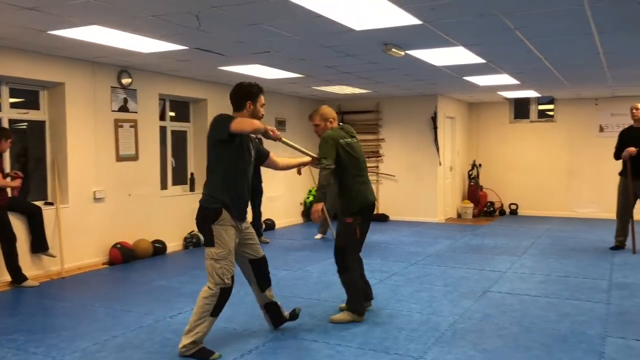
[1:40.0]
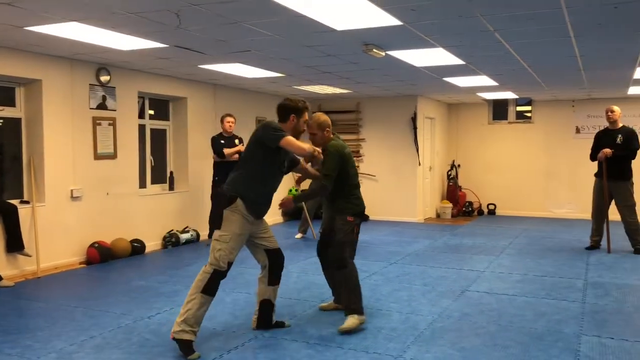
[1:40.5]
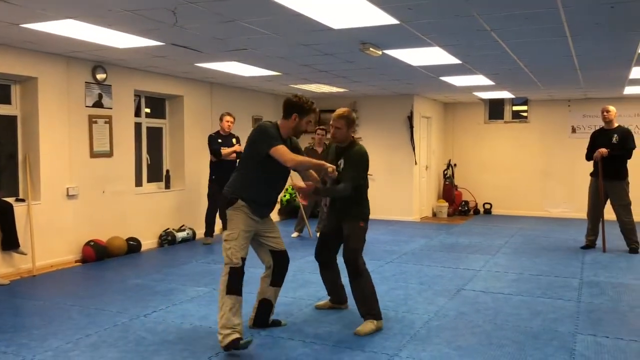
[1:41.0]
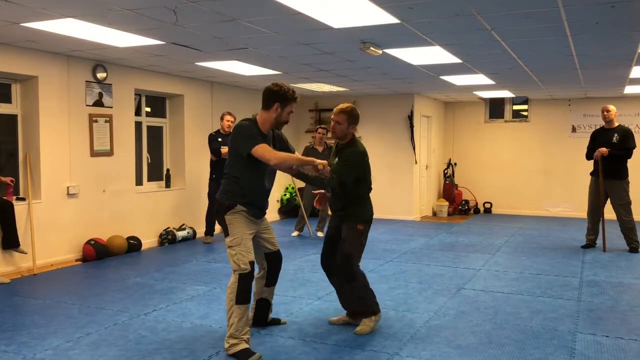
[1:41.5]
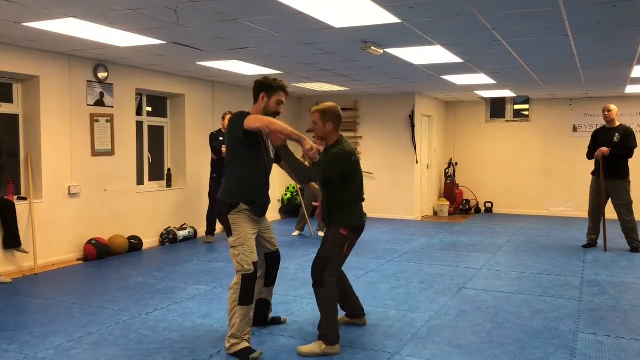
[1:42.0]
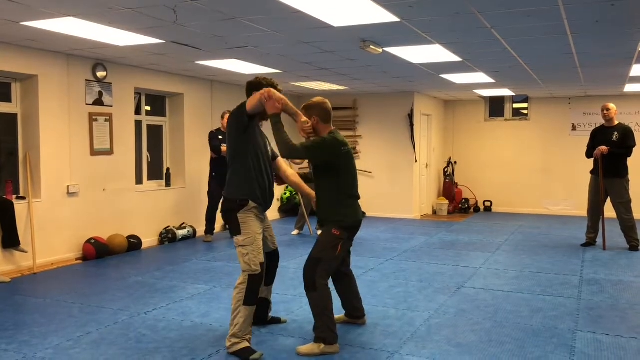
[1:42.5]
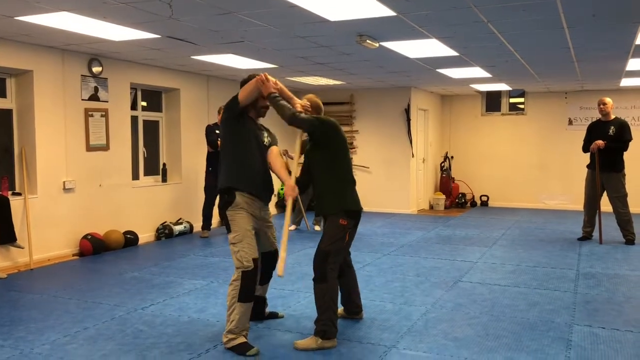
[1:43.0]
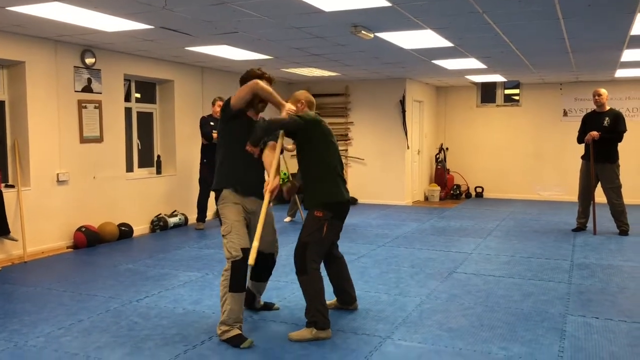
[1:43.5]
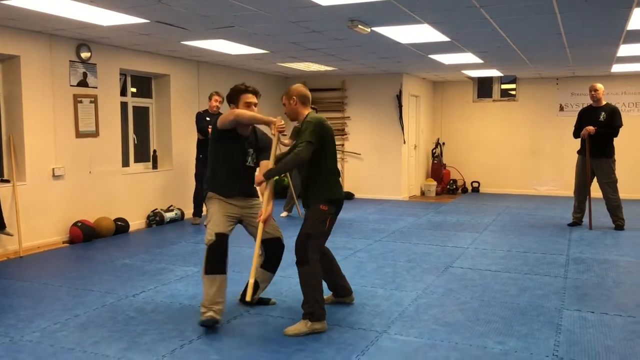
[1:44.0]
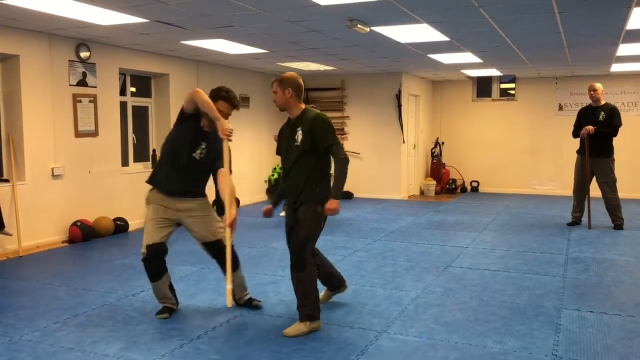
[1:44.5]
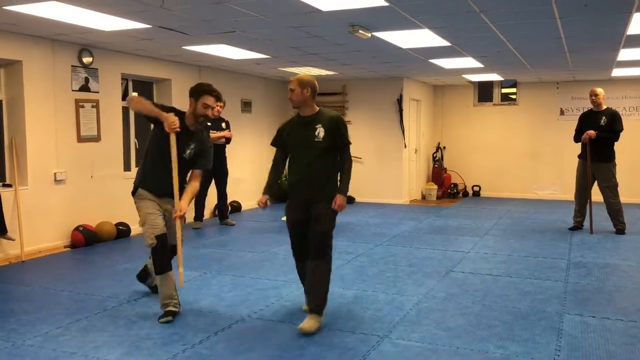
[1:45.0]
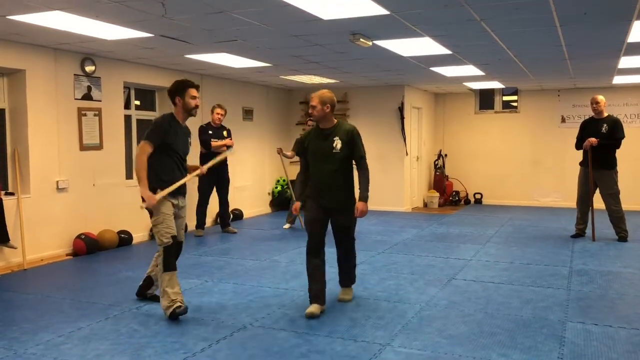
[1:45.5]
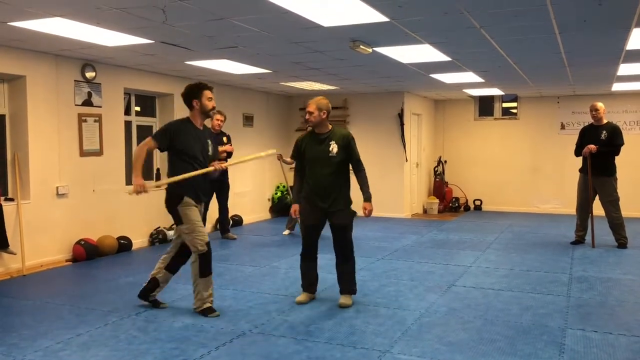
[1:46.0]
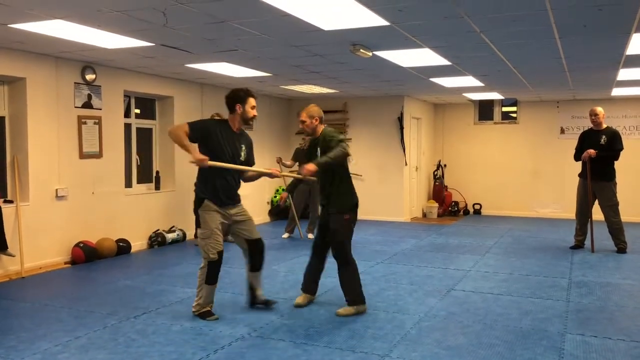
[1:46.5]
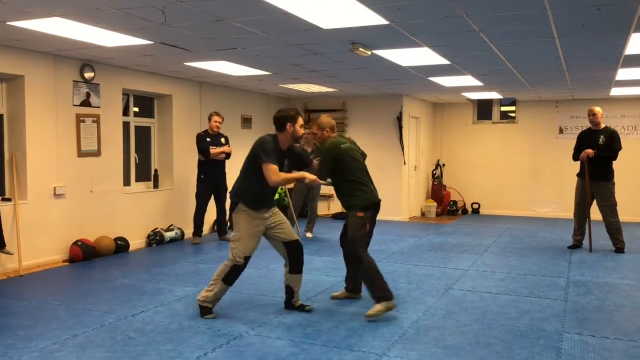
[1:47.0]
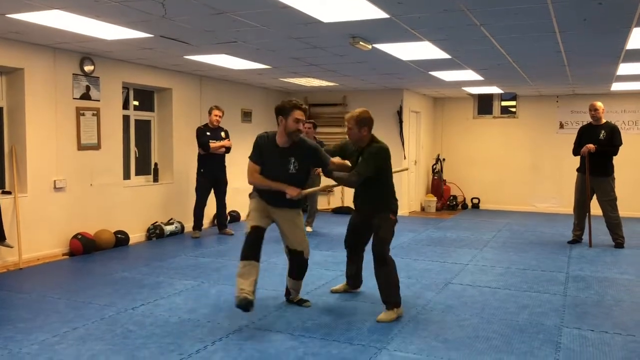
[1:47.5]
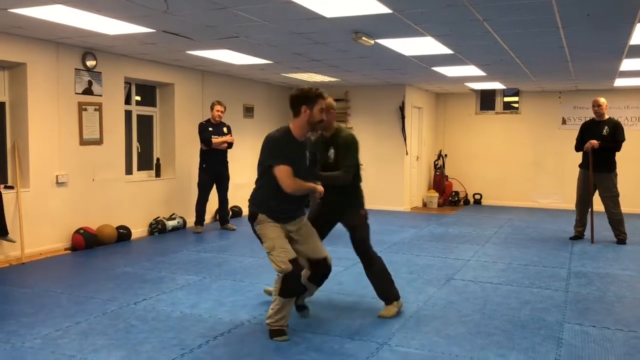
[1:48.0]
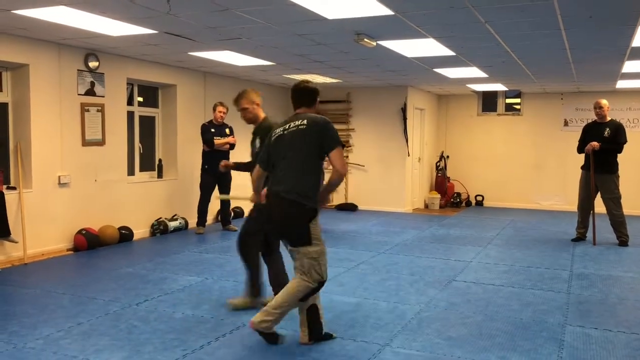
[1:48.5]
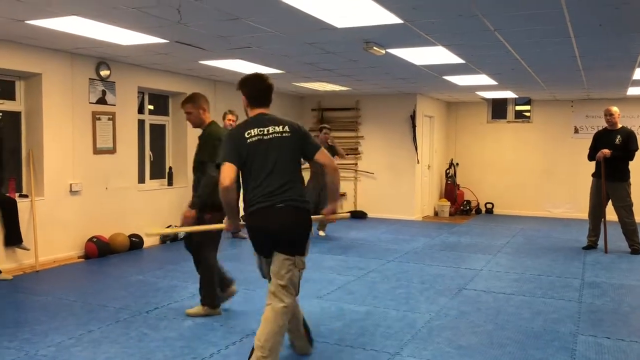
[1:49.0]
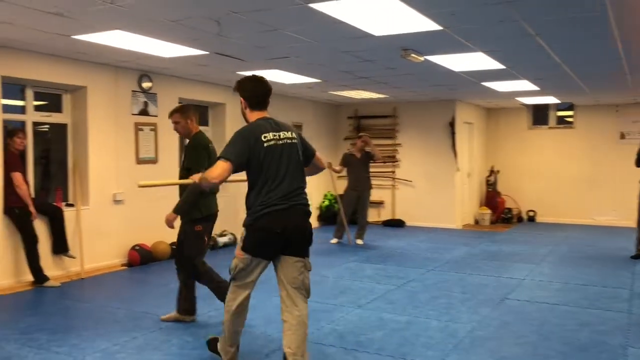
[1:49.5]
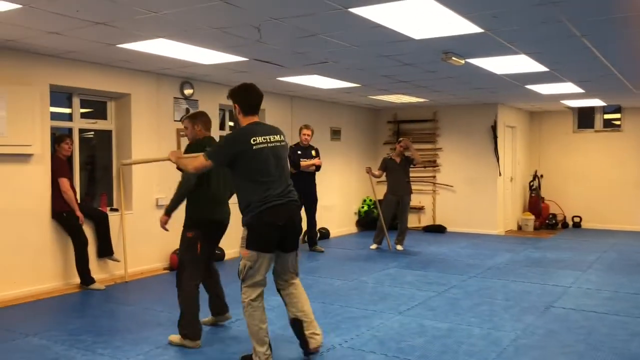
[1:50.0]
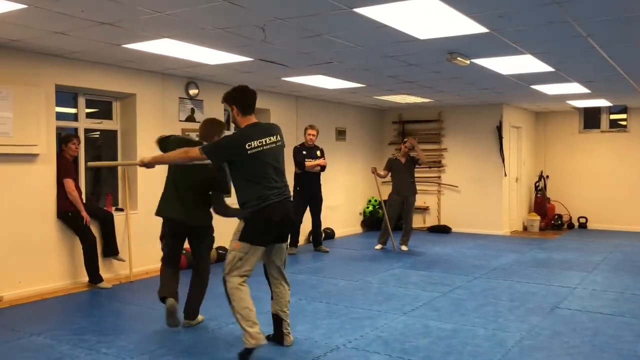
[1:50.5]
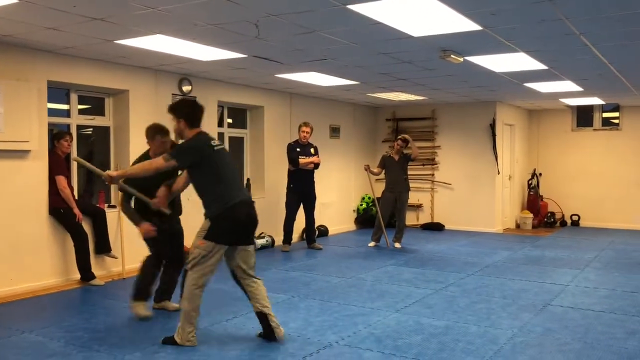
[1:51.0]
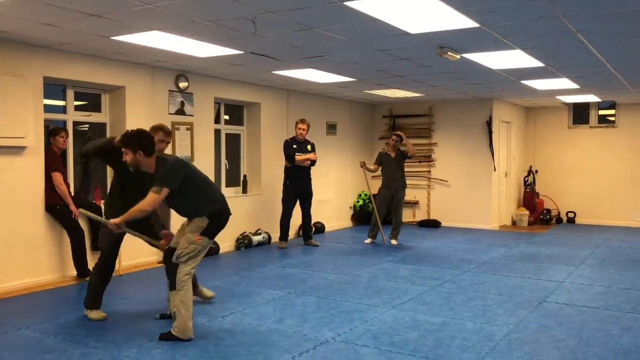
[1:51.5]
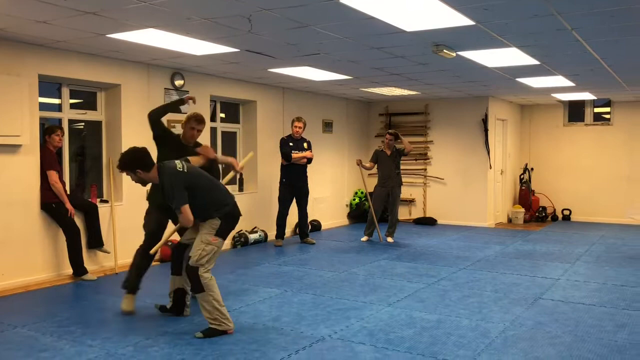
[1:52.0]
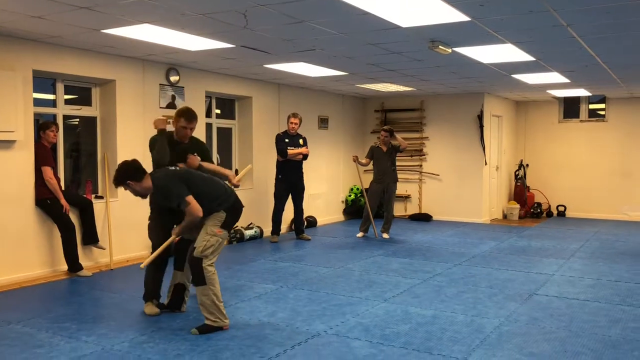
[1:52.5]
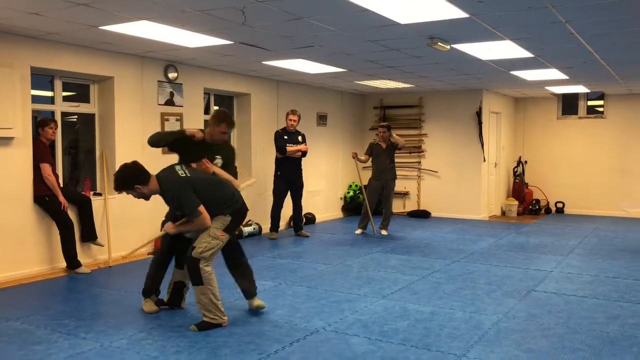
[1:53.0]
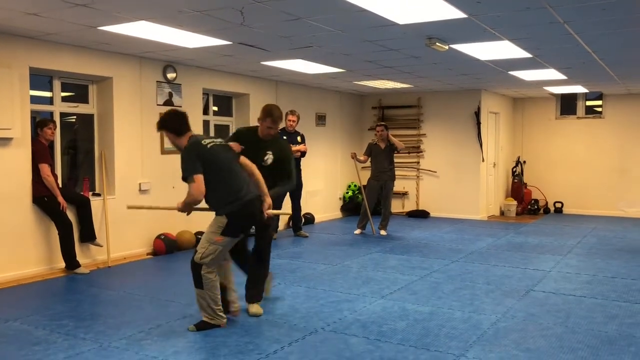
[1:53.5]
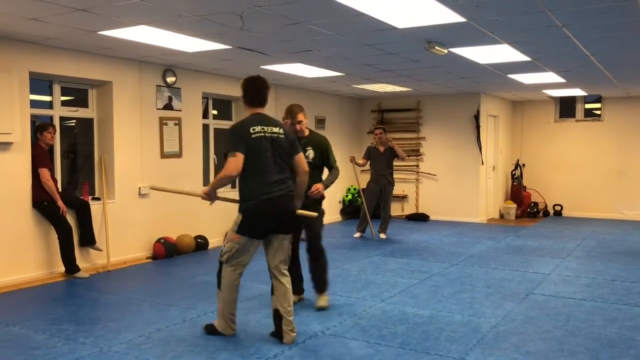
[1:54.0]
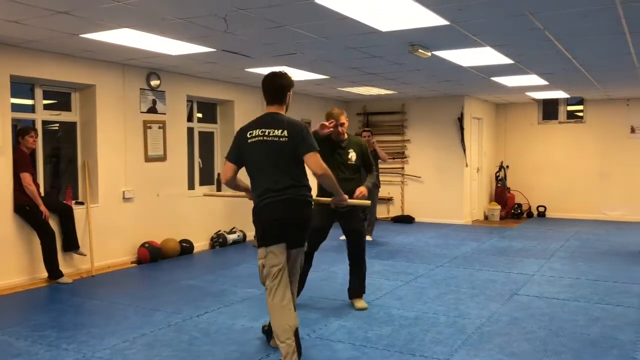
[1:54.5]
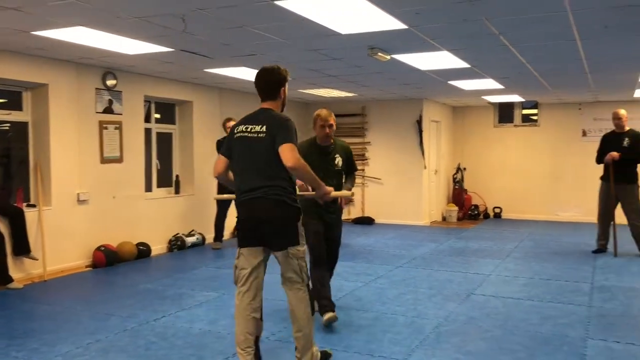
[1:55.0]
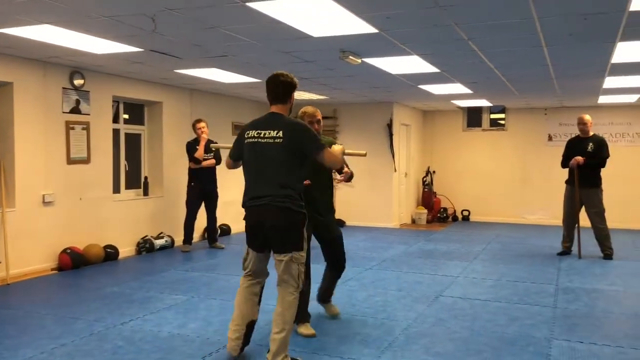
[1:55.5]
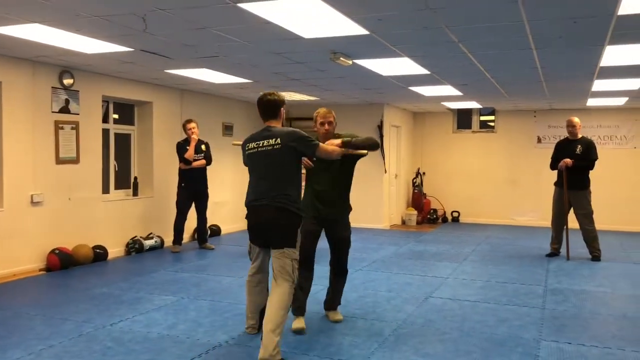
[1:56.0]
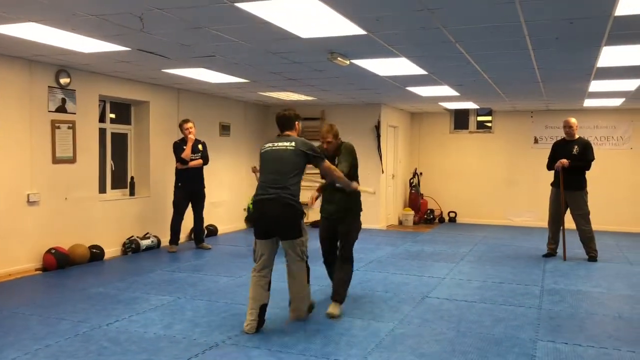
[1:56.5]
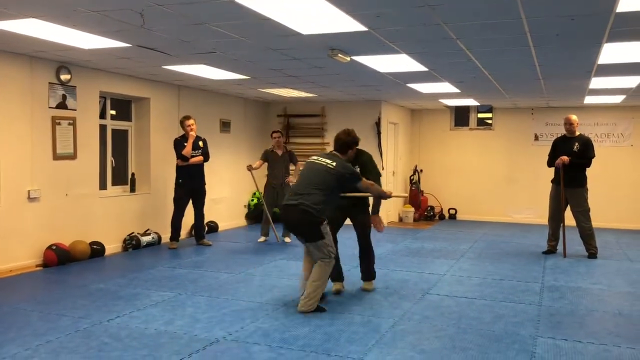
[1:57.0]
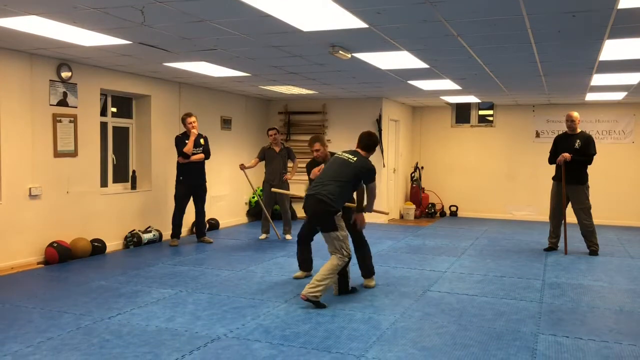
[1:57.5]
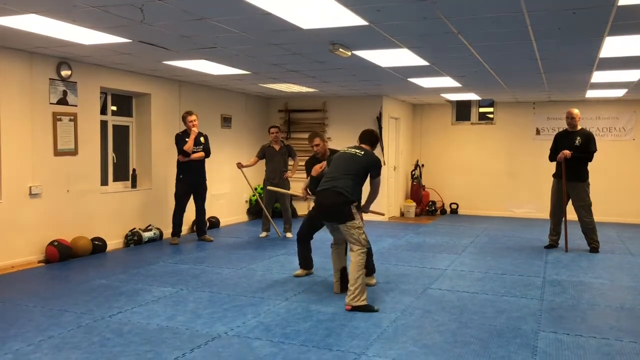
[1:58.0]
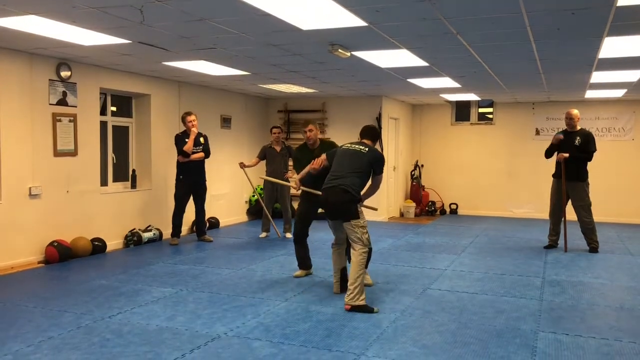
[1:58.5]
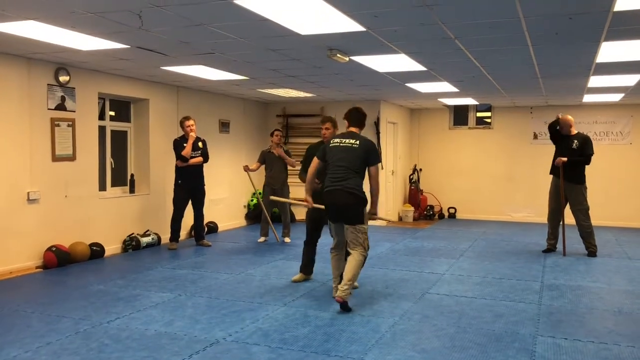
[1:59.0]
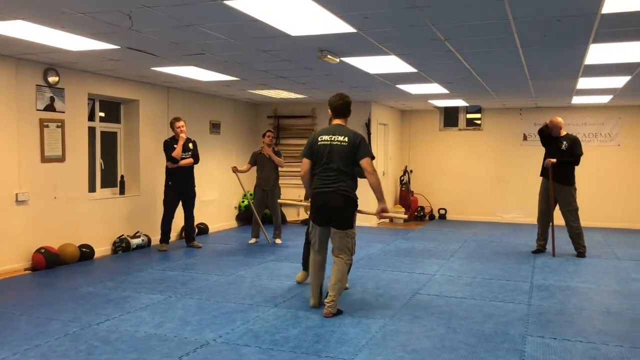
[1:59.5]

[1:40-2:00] The student holds a brown pole in both hands against the instructor. The instructor reaches out with his left hand to grab the student's right hand, pulling the student's arm upward, then grips the student's left arm with his right hand and pushes that arm upward, seemingly to disarm the student. The instructor then seems to make a fist with his right hand to hit the student right under the student's left arm. The student backs away, holding the pole downward toward the ground, and the instructor stands up straight, backing up as if to reset. The student pulls the pole back up, holds it horizontally toward the instructor, and pushes it forward. The instructor uses his left arm to try to grab the student's arm and his right arm to push the student's arm away.